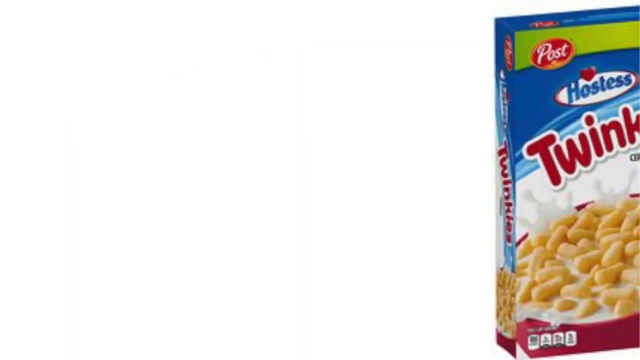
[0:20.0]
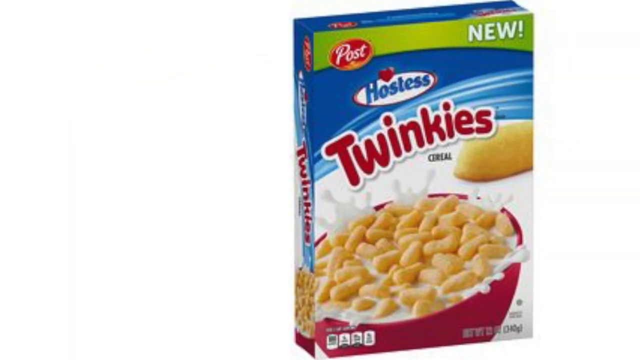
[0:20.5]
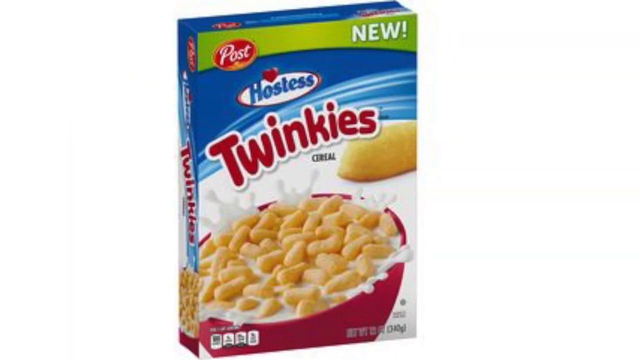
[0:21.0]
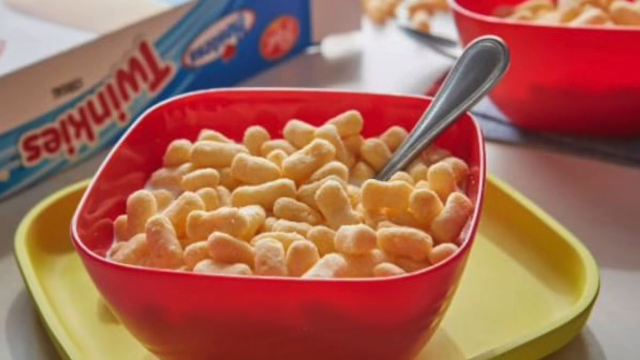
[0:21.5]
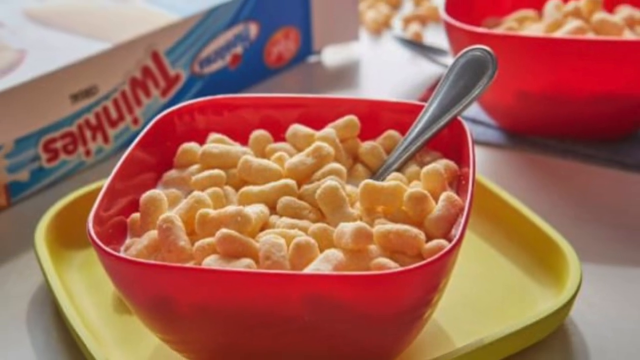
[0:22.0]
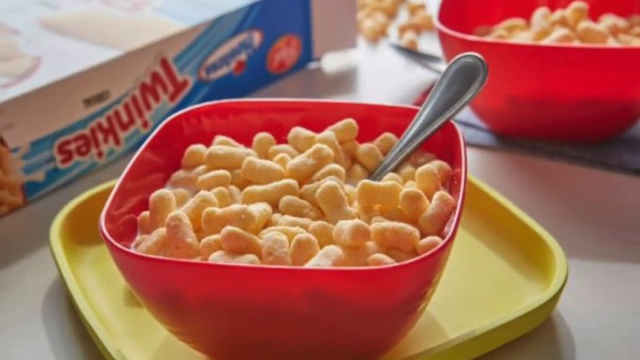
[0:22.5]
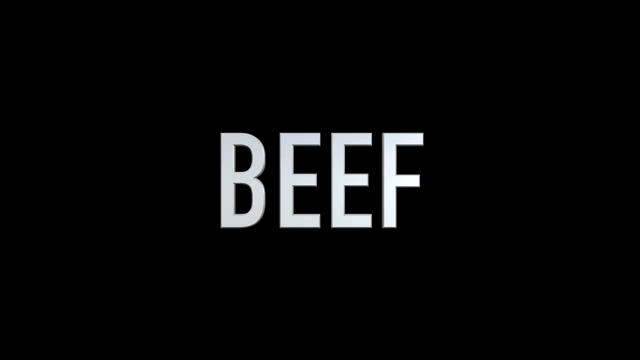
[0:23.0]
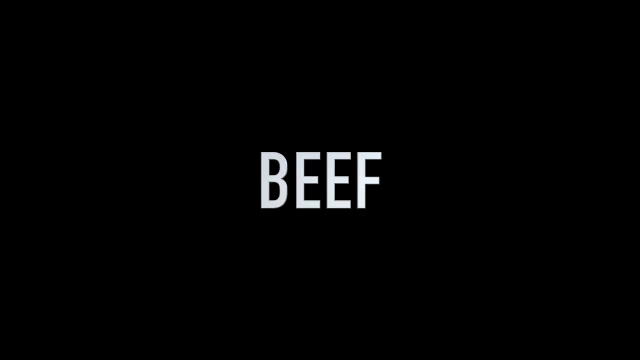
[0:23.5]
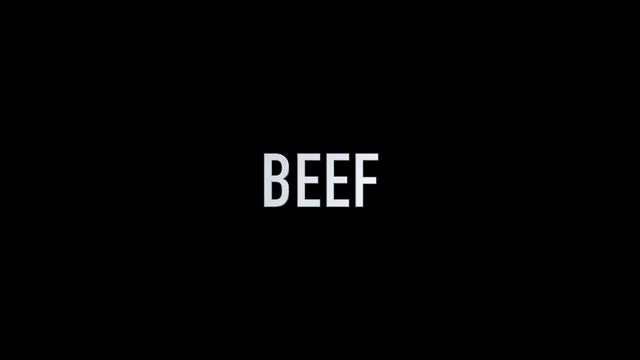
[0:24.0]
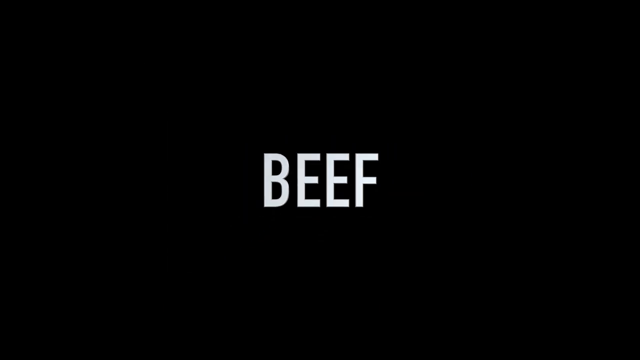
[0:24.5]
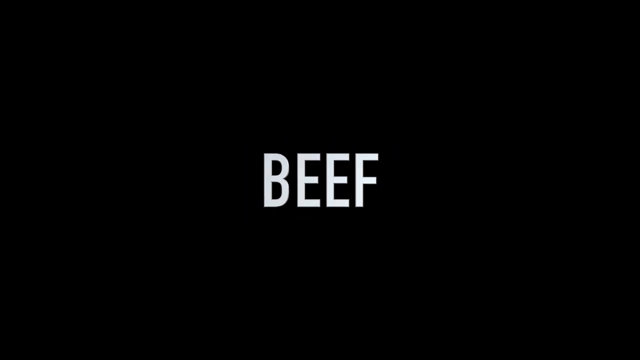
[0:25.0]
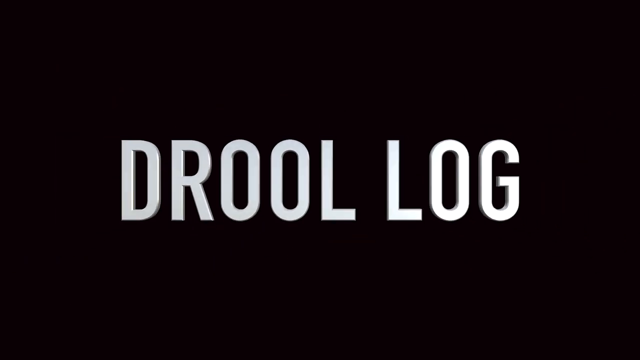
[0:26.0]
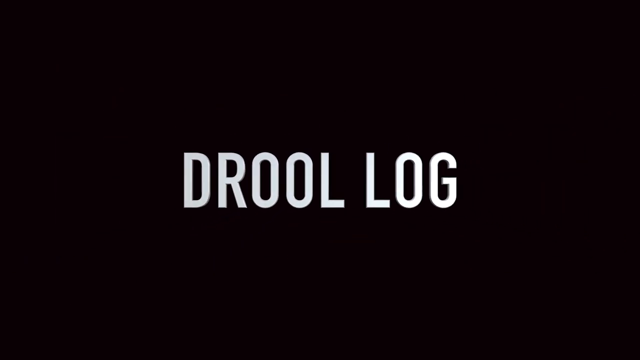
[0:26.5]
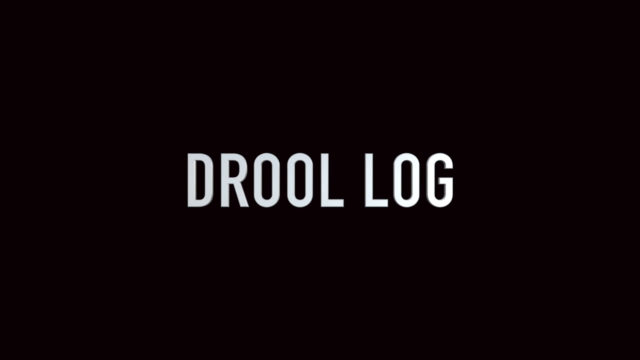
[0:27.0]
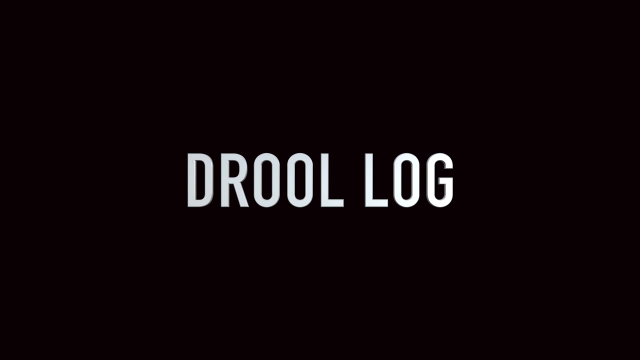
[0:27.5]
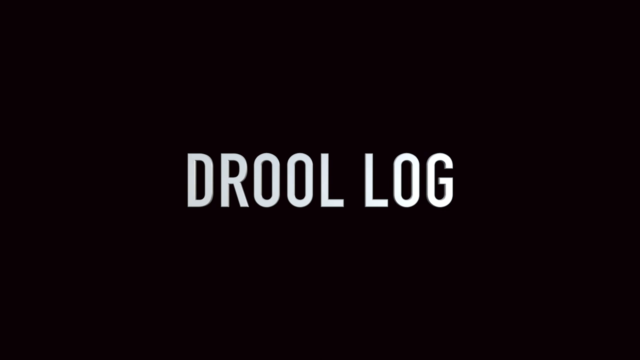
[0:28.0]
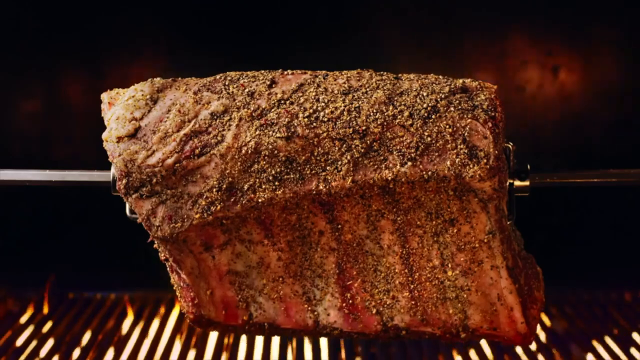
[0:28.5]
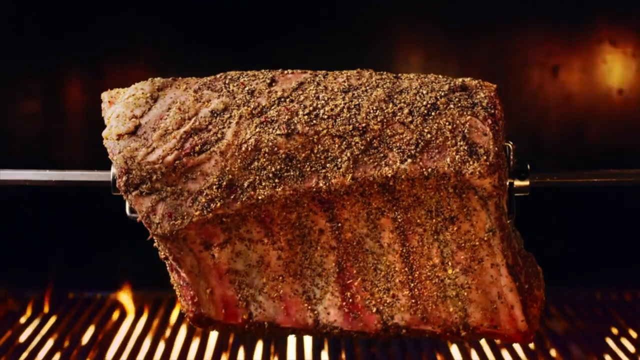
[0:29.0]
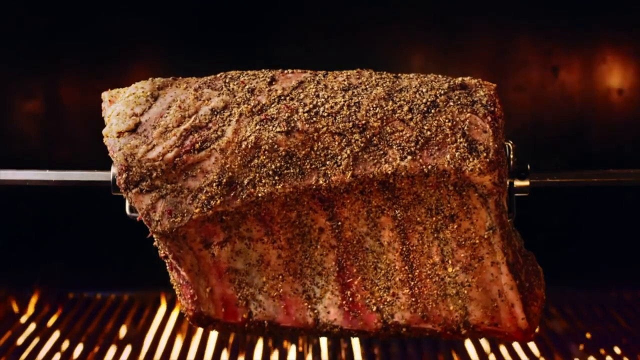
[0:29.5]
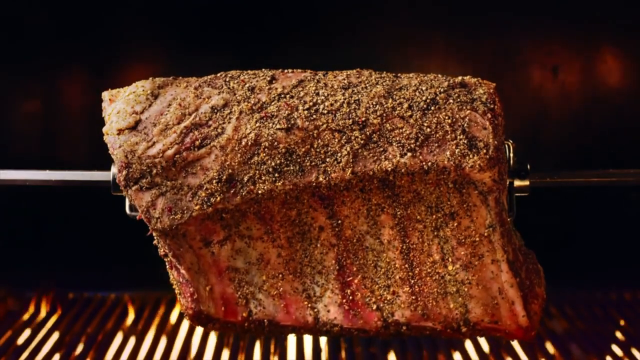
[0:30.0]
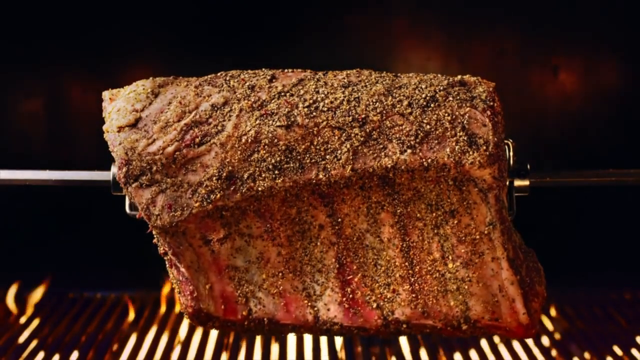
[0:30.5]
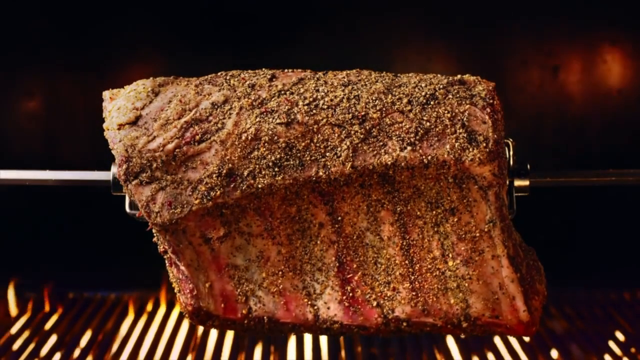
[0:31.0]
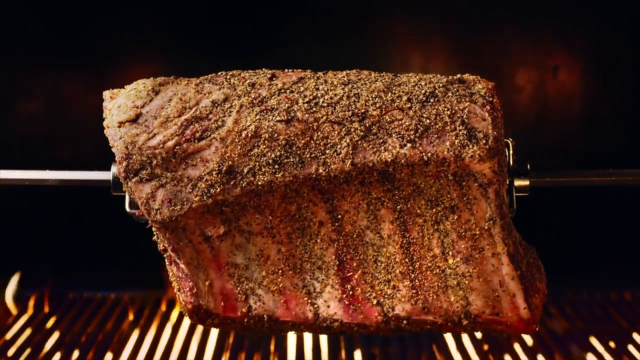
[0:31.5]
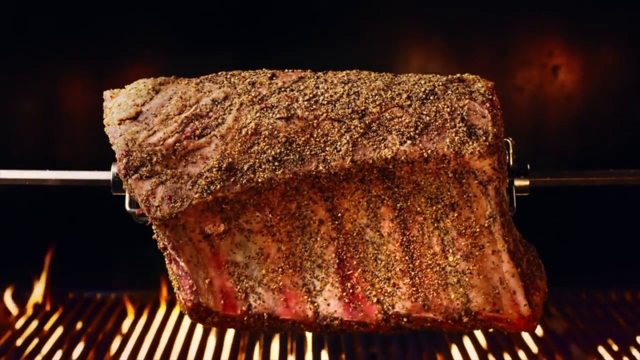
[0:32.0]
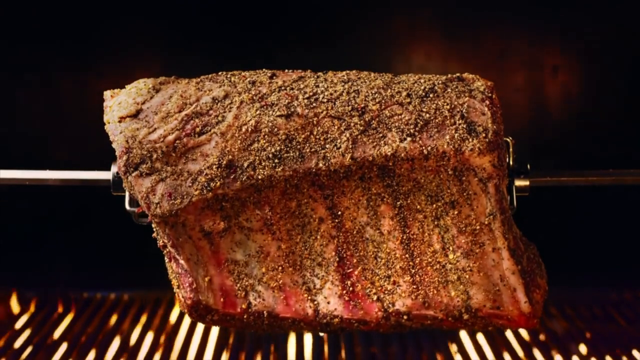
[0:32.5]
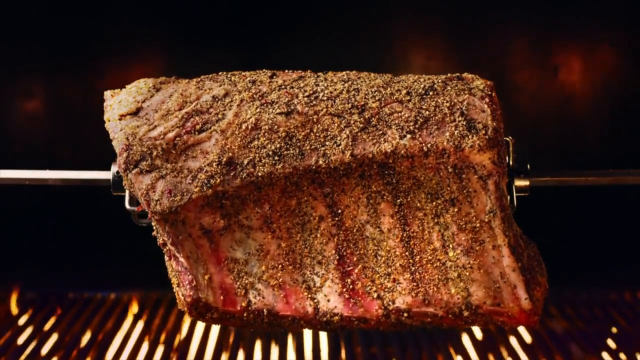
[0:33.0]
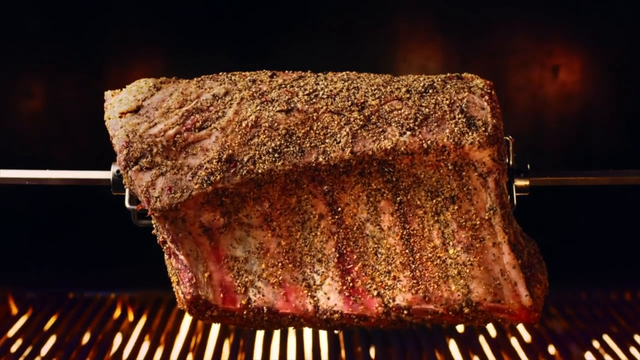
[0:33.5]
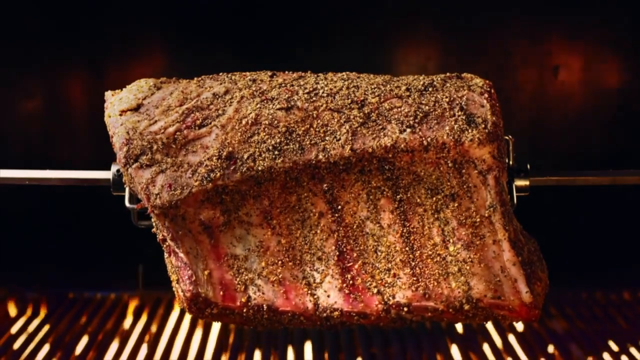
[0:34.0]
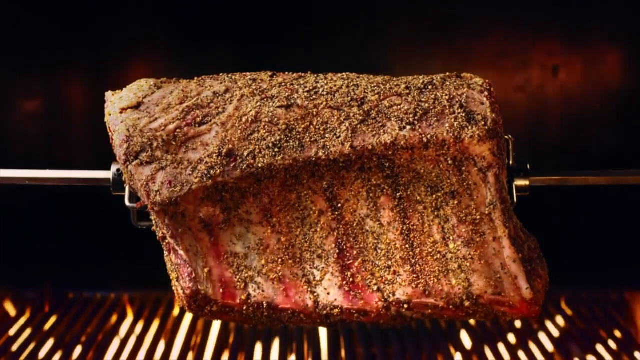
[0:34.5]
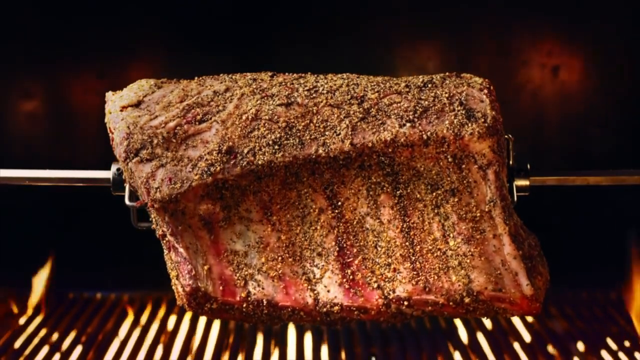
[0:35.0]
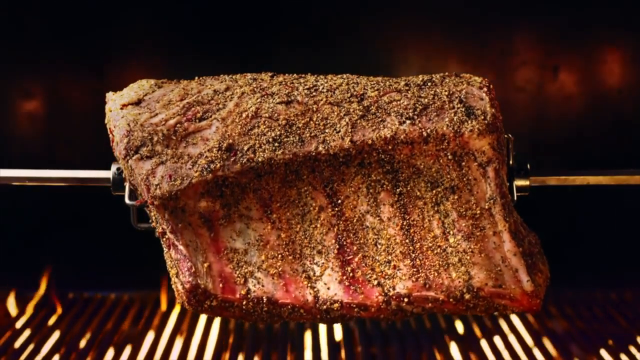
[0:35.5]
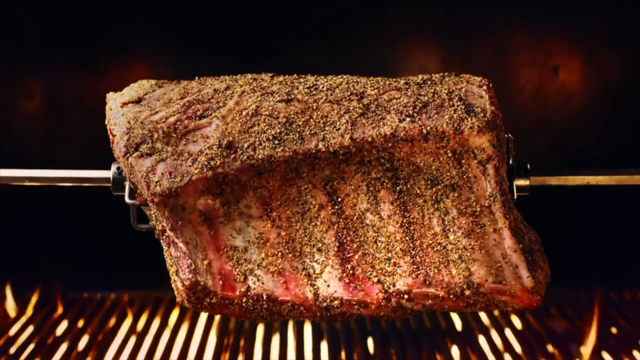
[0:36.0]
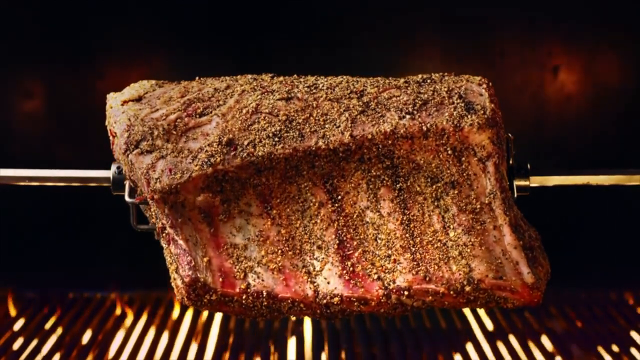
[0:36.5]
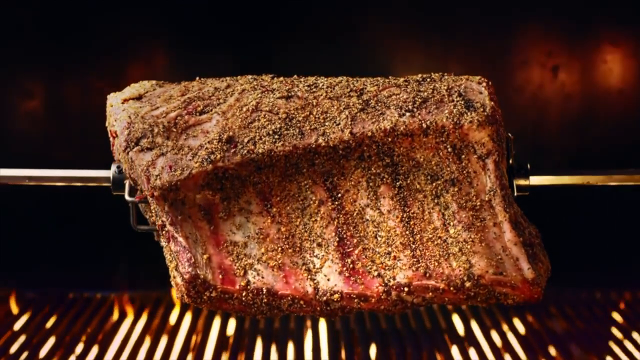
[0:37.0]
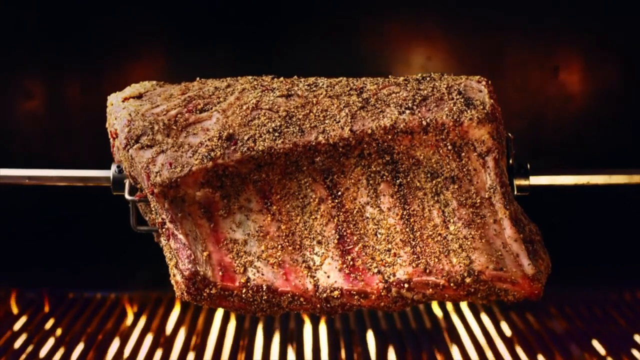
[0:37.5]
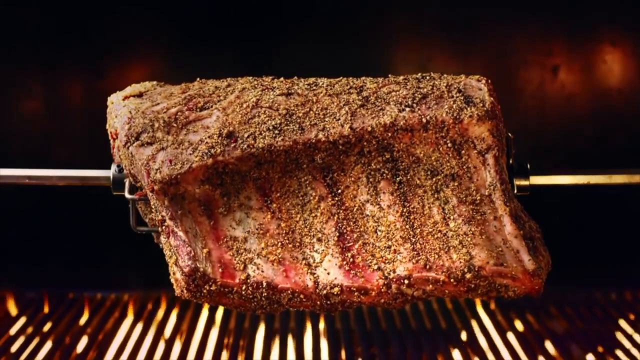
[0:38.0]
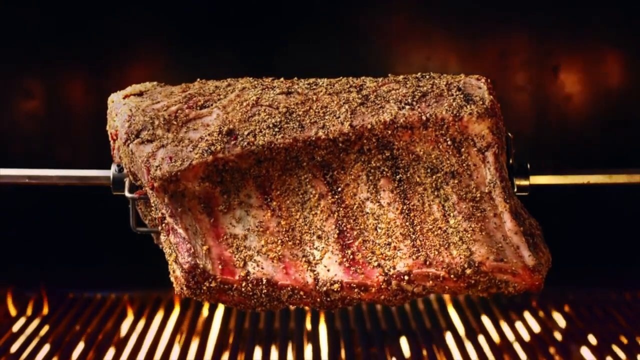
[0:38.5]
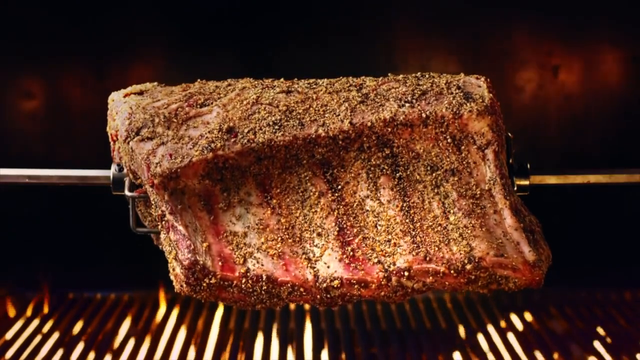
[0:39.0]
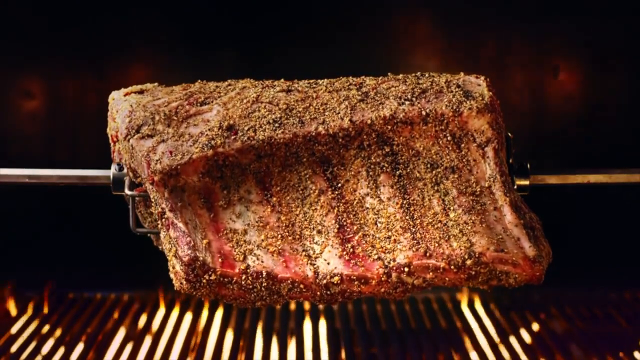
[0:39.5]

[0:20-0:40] A blue, green and white box of Hostess Twinkies cereal moves from the right to the center of the screen. Next comes a rectangular red plastic cereal container filled with the Twinkies cereal, with a silver spoon in it. The shot slowly zooms out, then the screen turns all black and the word "BEEF" appears in white in the center, getting smaller and smaller until it disappears. The words "drool log" then appear in white against the same black background, also shrinking until they disappear. Next, a log or piece of meat slowly rotates on a stake in front of a flame fire; it looks like a section of rib, and it is visibly seasoned.